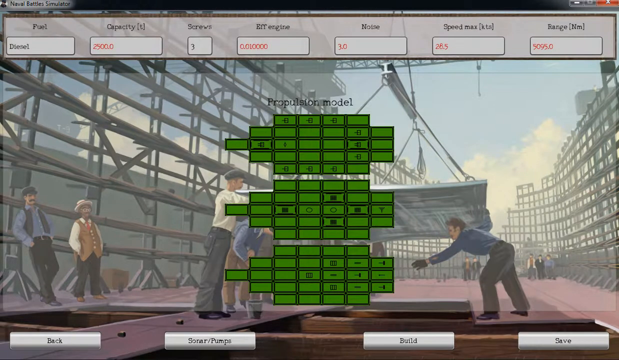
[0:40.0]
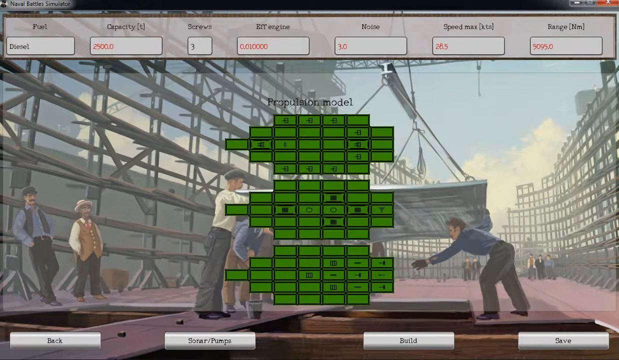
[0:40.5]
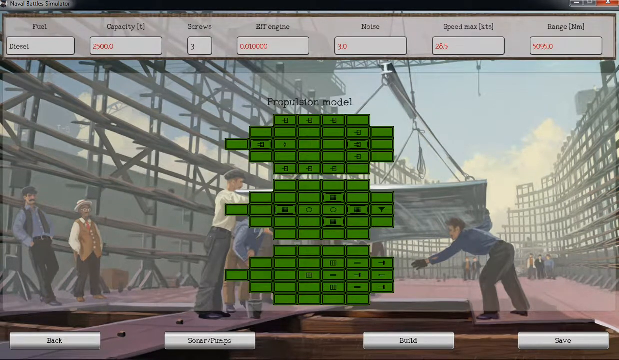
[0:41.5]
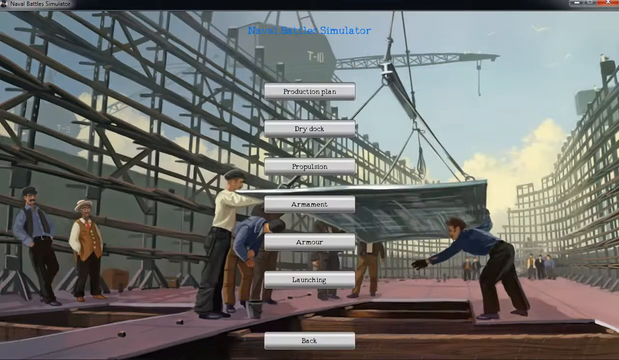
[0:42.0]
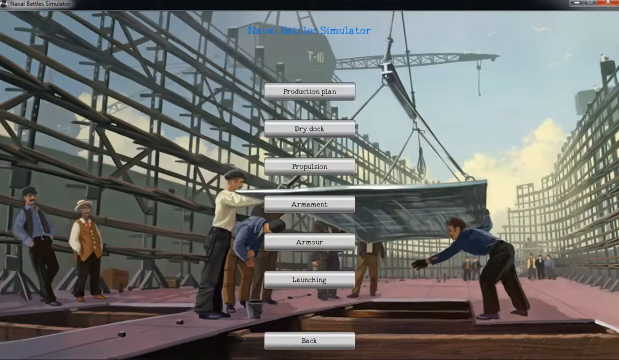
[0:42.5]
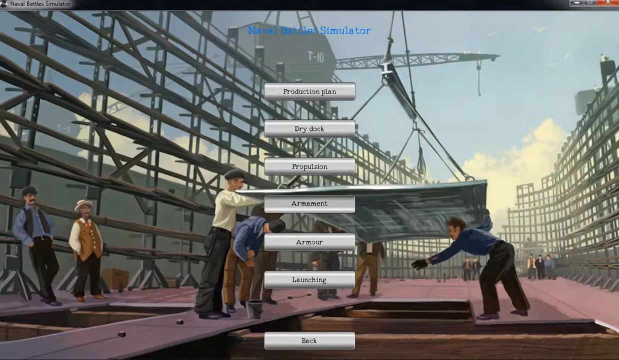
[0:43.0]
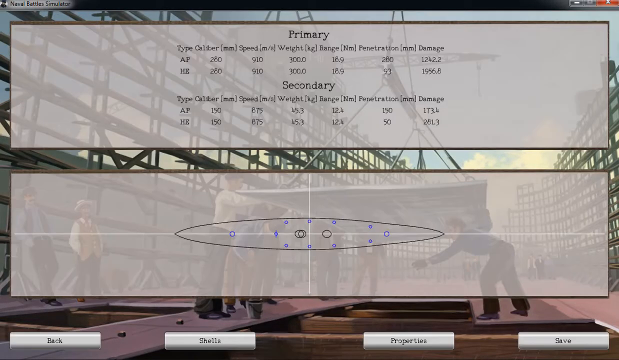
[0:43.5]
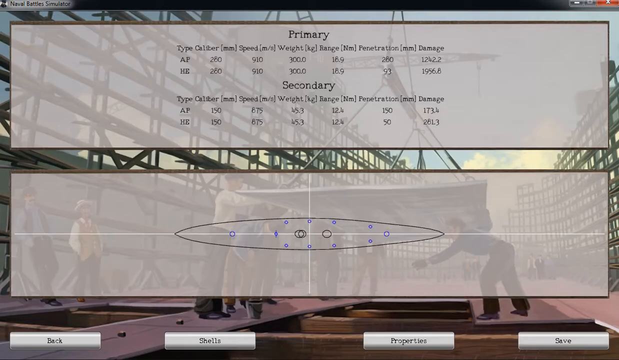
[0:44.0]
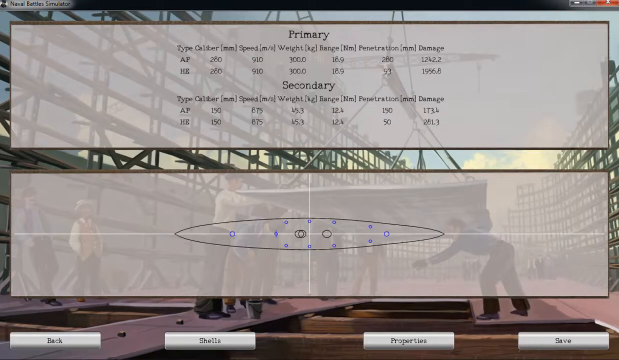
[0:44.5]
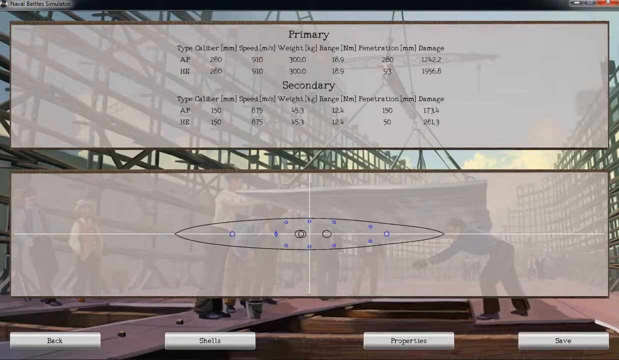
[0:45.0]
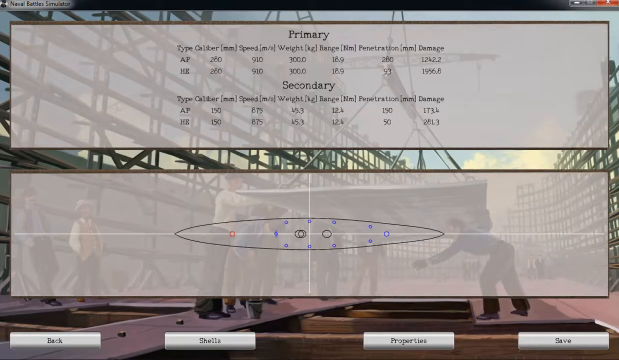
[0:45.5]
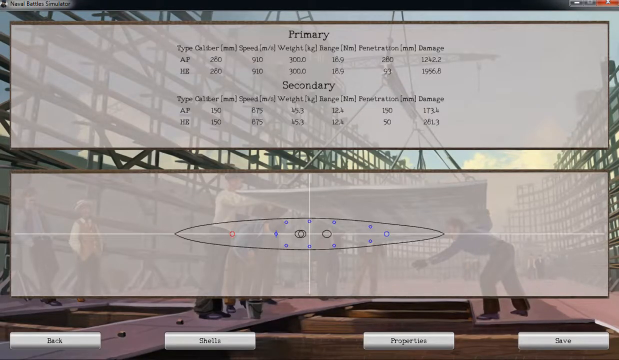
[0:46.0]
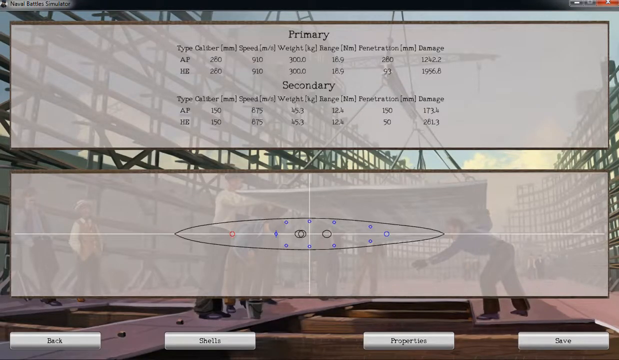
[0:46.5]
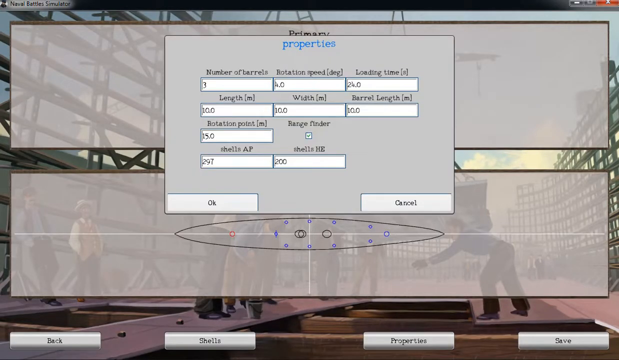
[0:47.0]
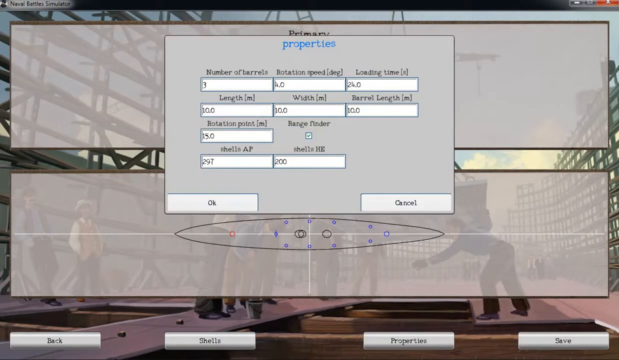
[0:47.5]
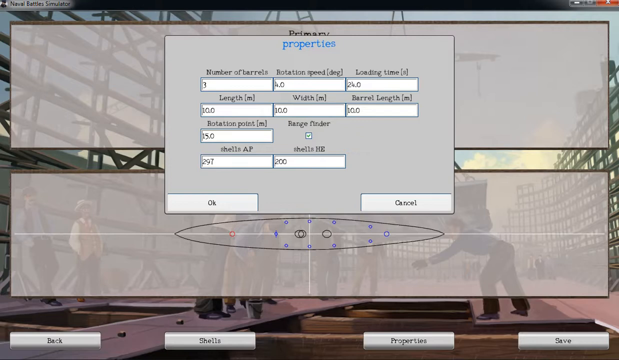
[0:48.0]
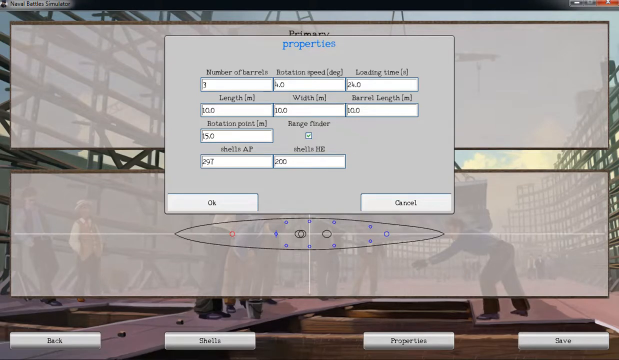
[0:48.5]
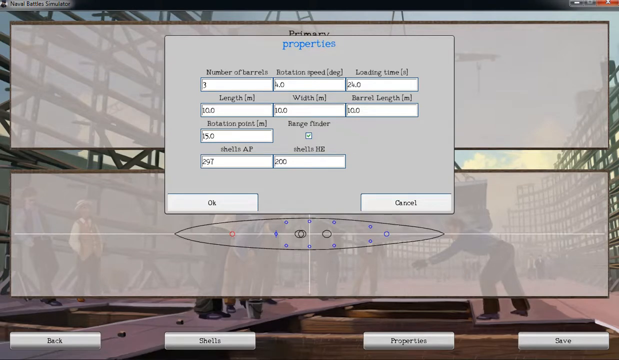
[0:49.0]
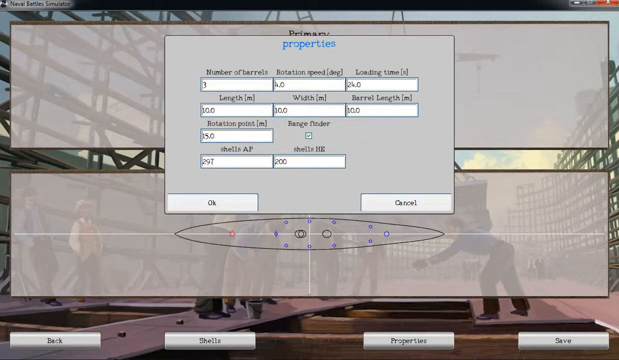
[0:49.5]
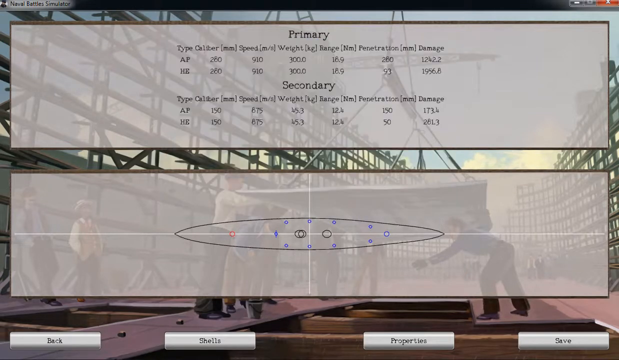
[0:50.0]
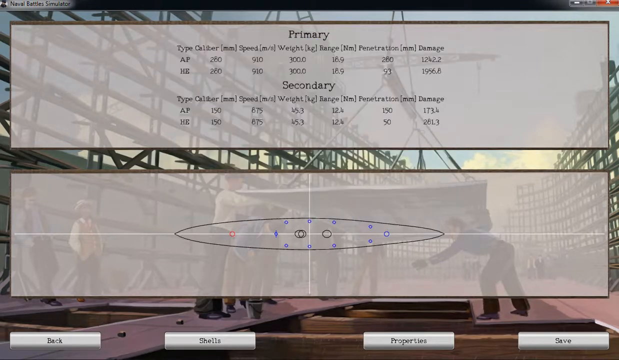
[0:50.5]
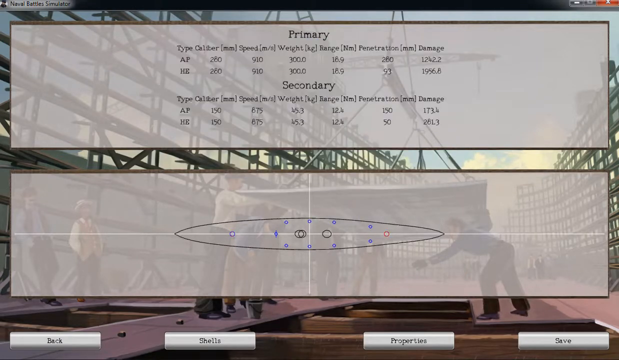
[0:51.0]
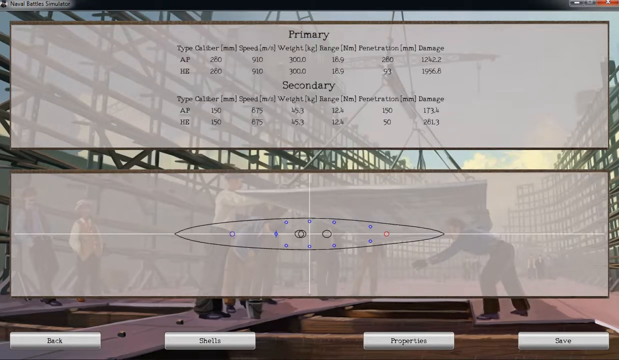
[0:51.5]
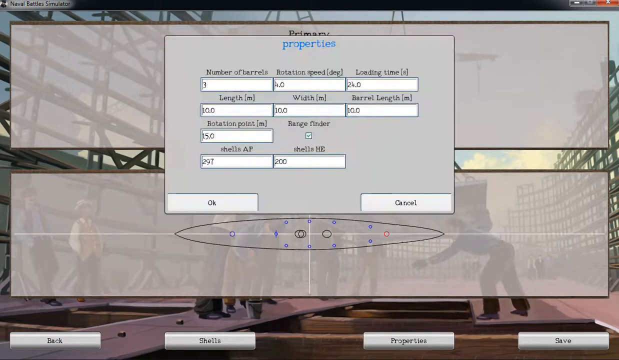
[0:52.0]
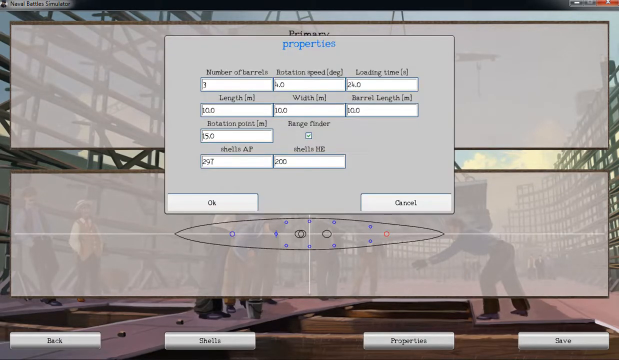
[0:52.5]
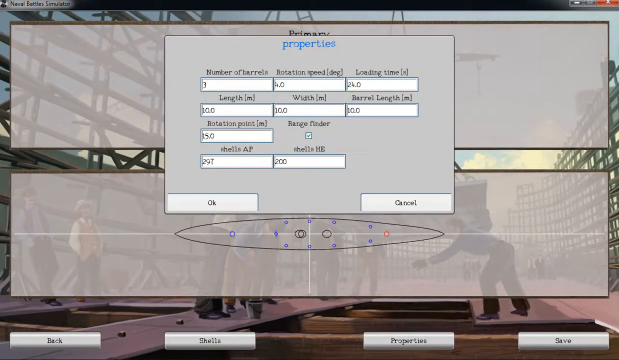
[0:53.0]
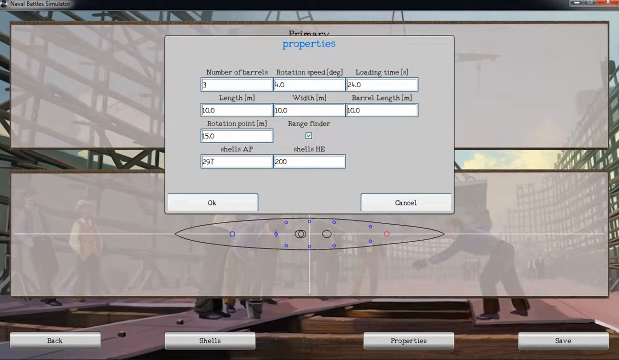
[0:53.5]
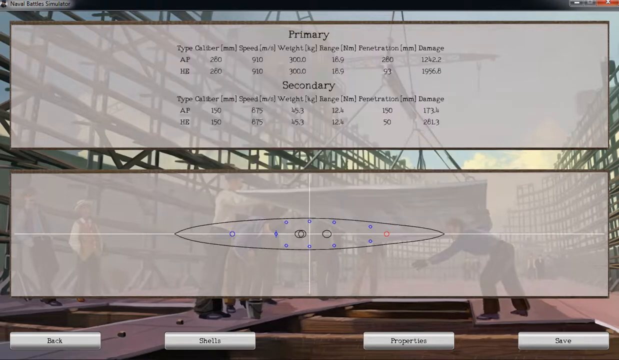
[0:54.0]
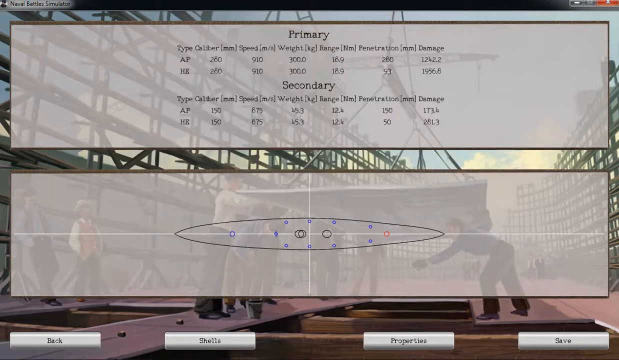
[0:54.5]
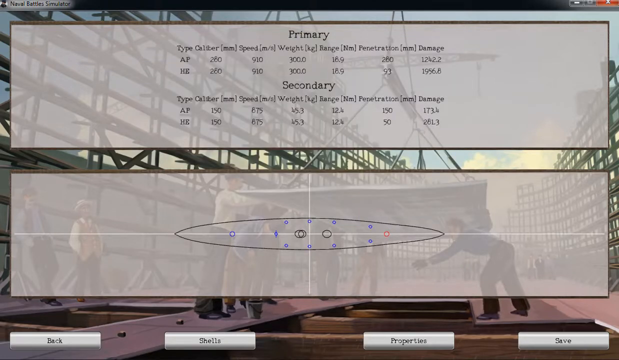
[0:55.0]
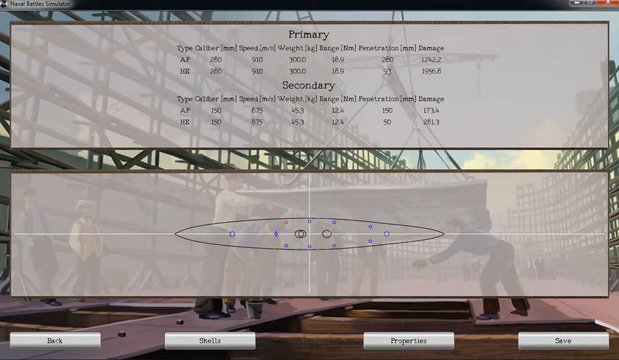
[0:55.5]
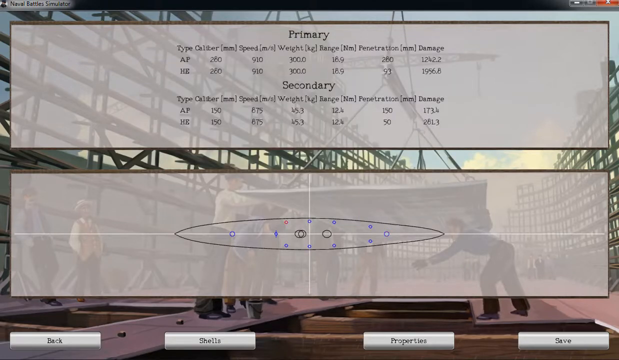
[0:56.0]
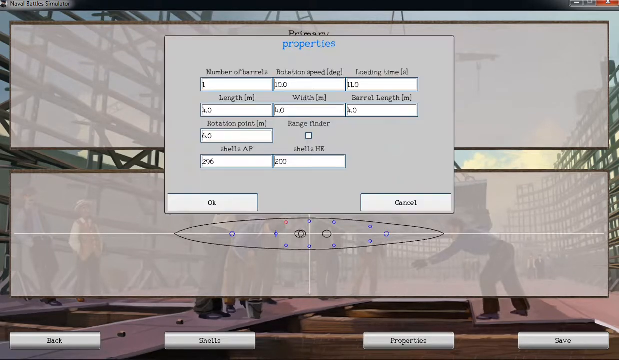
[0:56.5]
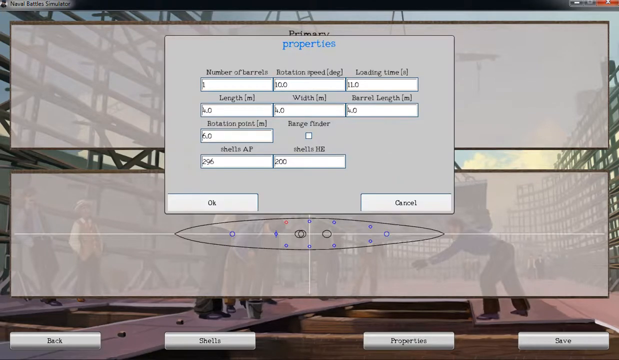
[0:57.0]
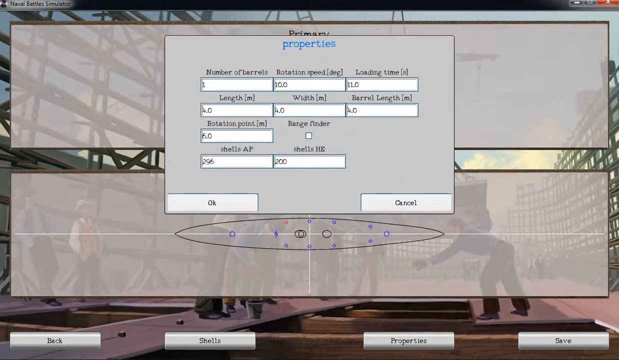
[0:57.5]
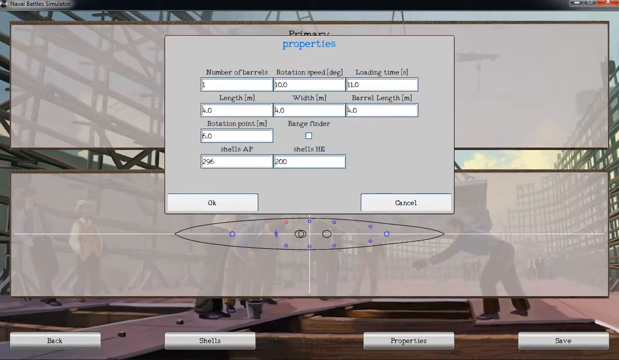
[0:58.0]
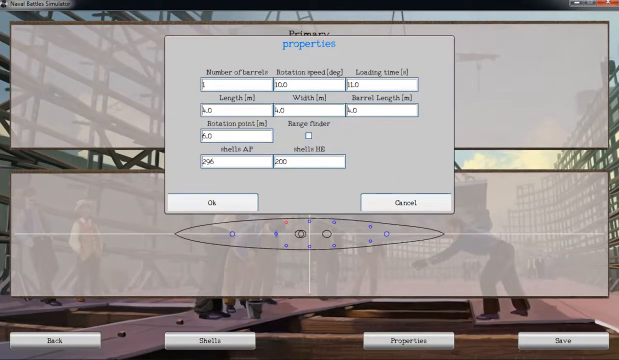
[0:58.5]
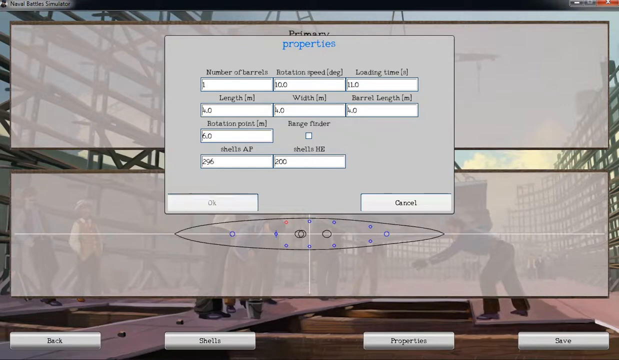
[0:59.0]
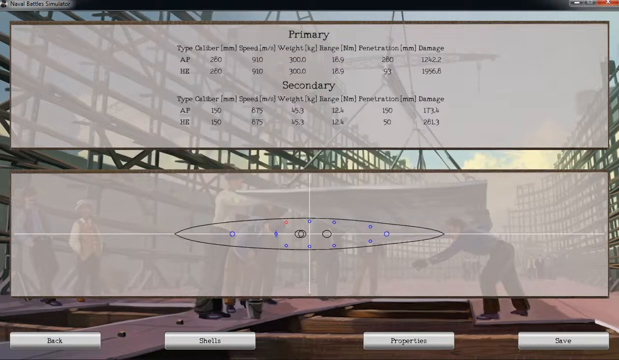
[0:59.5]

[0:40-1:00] The men on the boat are working, about seven of them. One is bending down, kind of working on something, under a huge concrete-like thing. He wears gloves and seems to be trying to talk to another person working on it. A man stands over to the left next to some shelves, wearing a hat kind of from the 1920s. A man standing next to him has his hands in his pockets, and they seem to be watching the workers work on the object in the middle. The person then pulls up a screen with white rectangular boxes with little boxes inside.